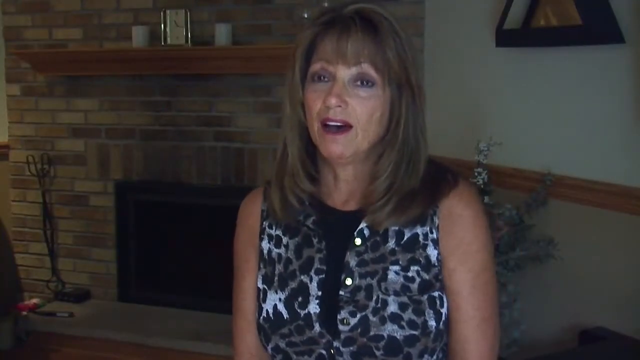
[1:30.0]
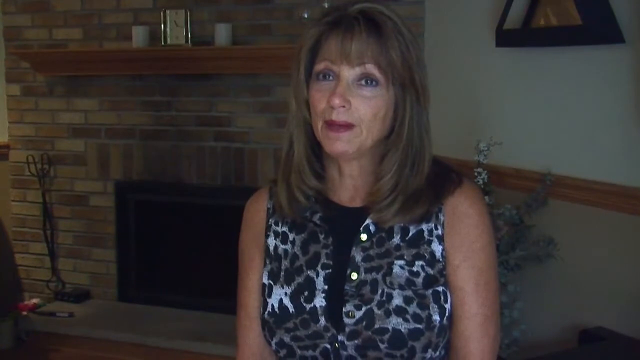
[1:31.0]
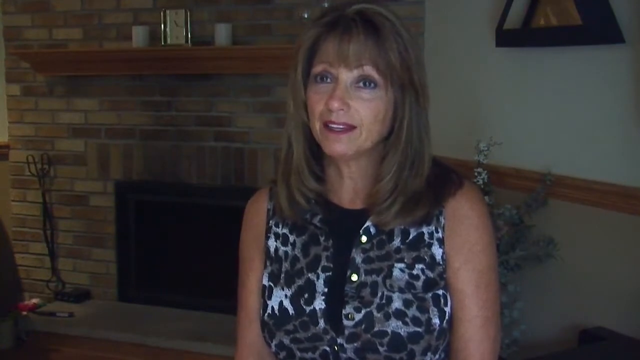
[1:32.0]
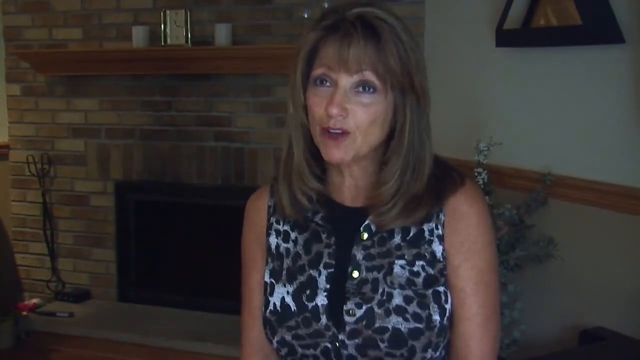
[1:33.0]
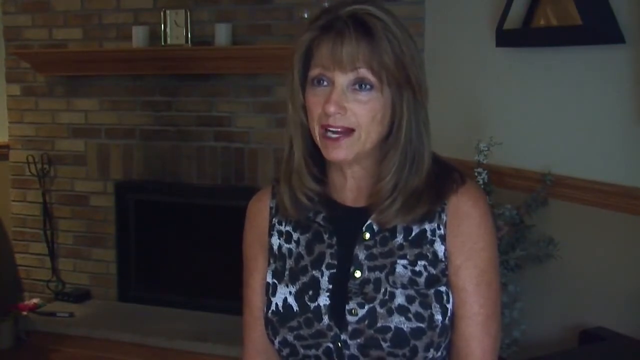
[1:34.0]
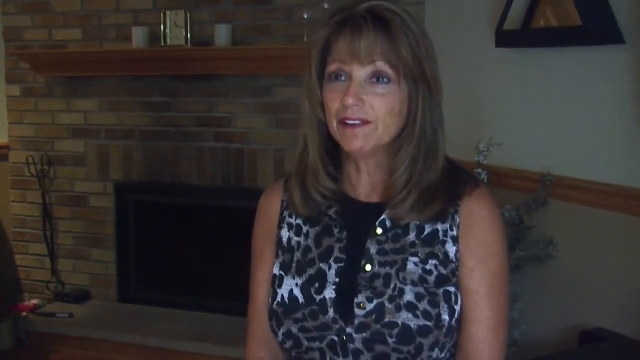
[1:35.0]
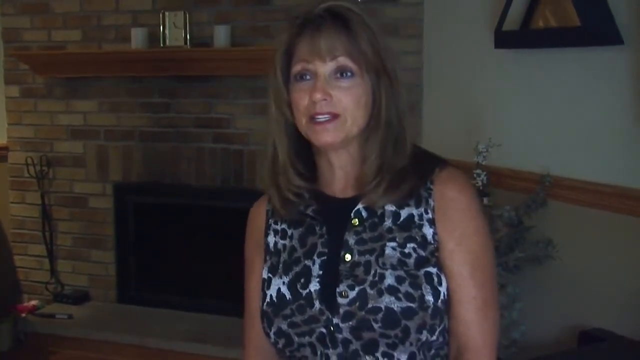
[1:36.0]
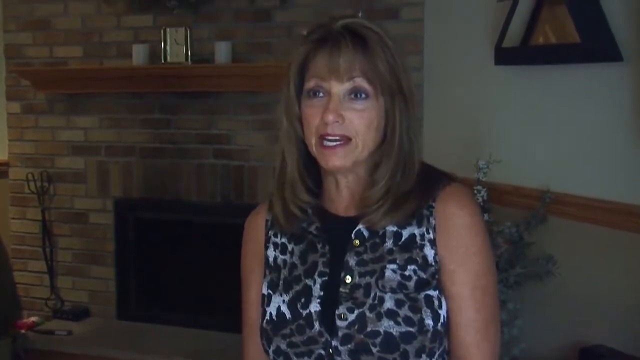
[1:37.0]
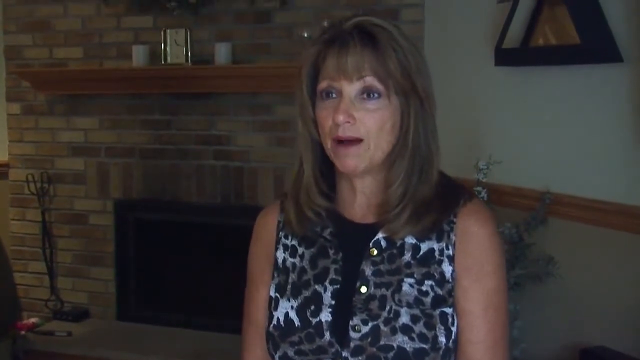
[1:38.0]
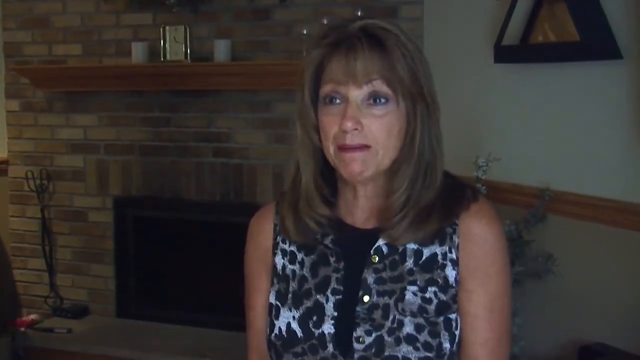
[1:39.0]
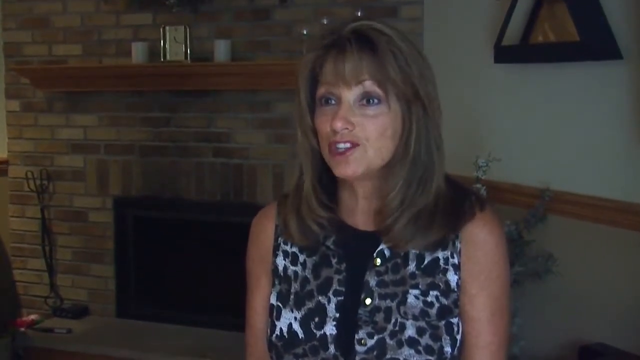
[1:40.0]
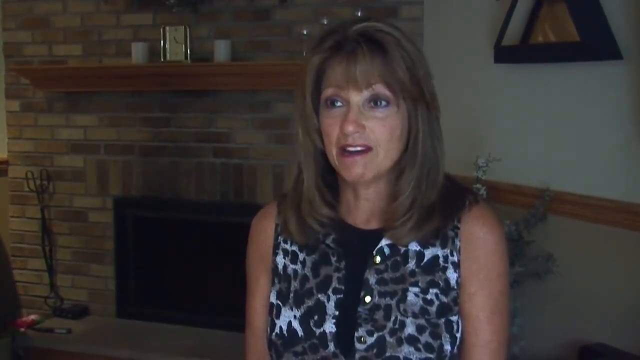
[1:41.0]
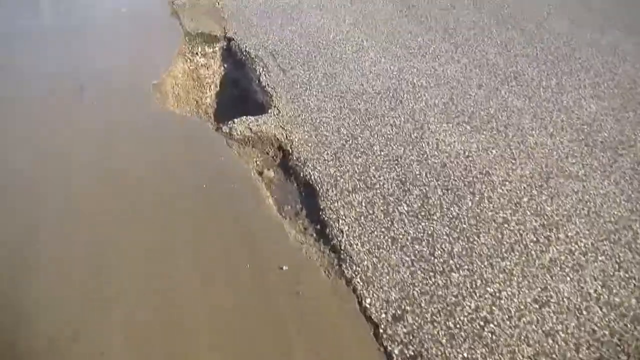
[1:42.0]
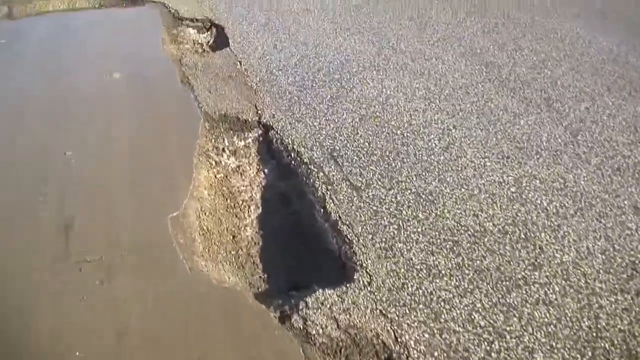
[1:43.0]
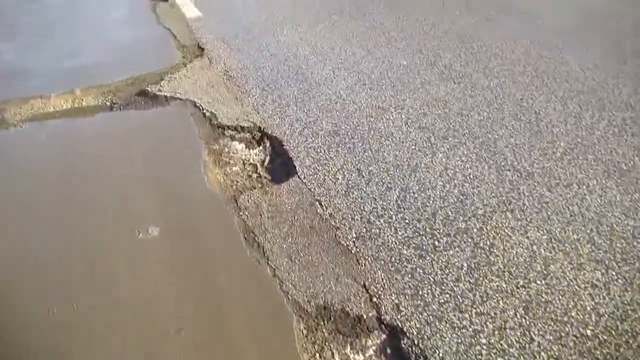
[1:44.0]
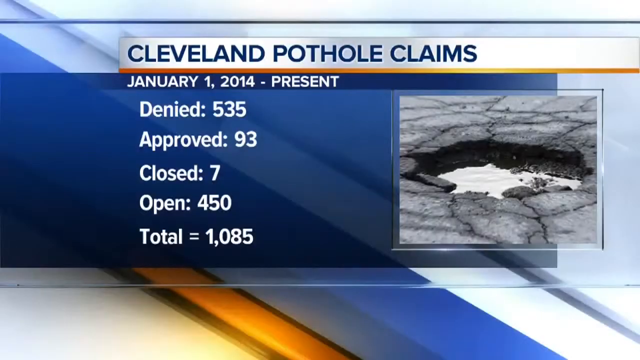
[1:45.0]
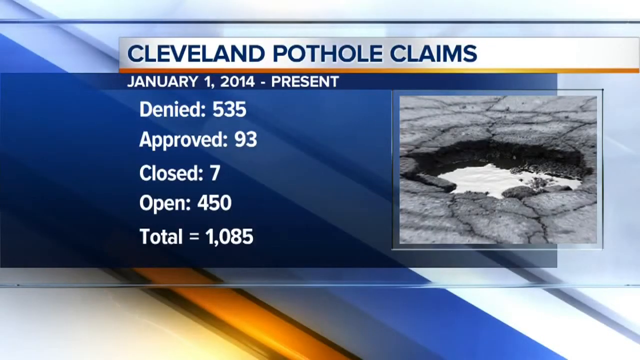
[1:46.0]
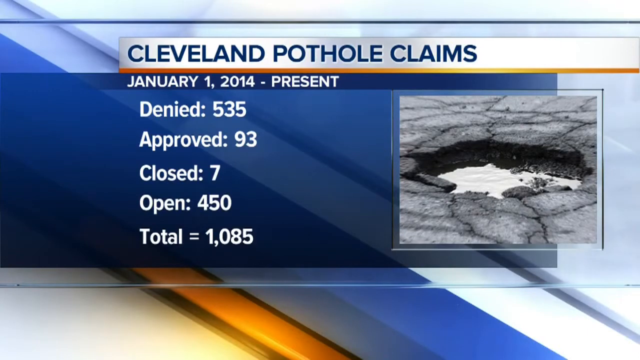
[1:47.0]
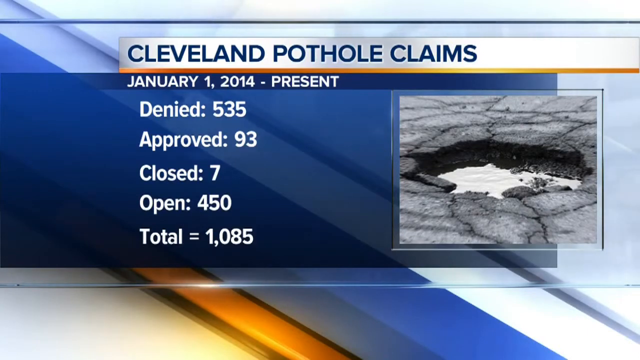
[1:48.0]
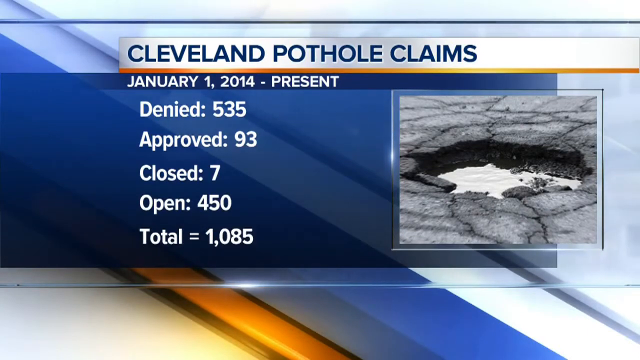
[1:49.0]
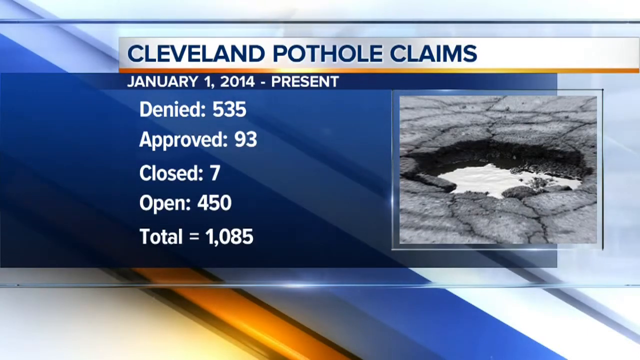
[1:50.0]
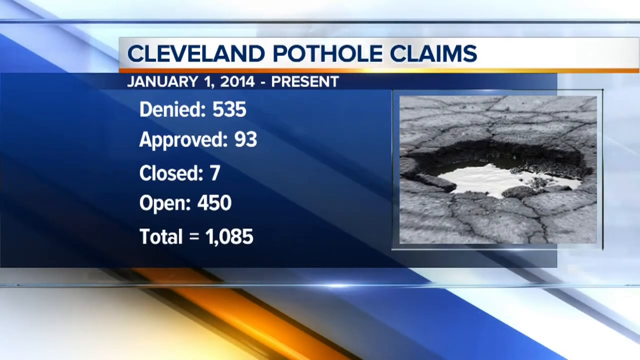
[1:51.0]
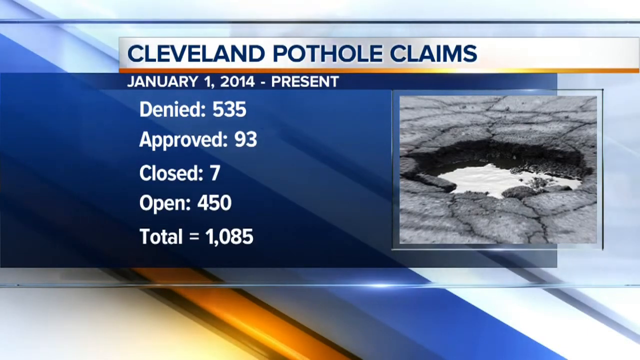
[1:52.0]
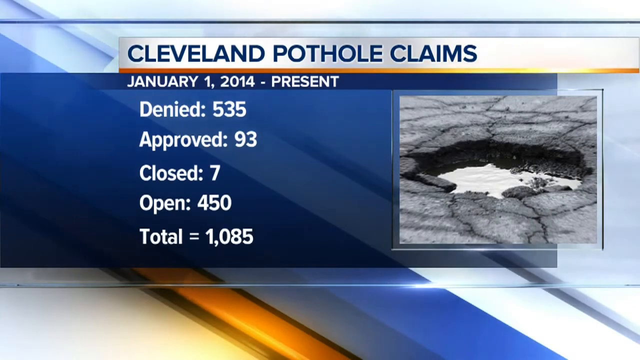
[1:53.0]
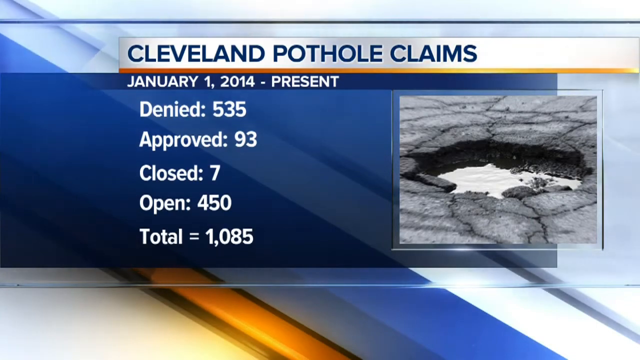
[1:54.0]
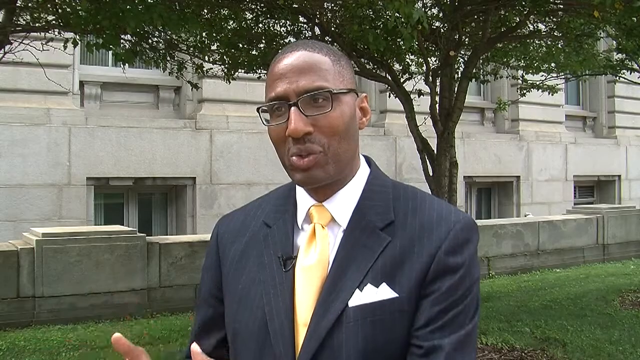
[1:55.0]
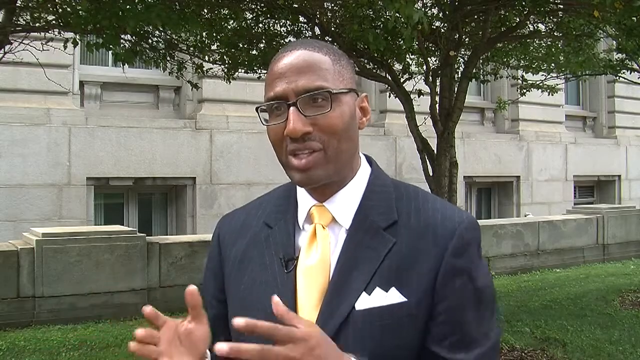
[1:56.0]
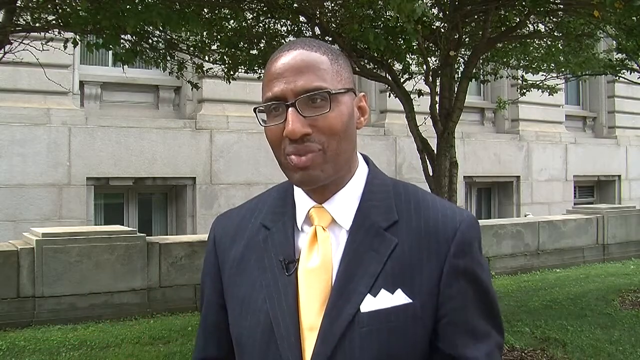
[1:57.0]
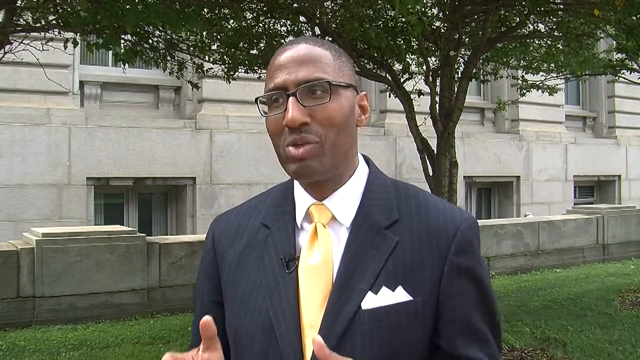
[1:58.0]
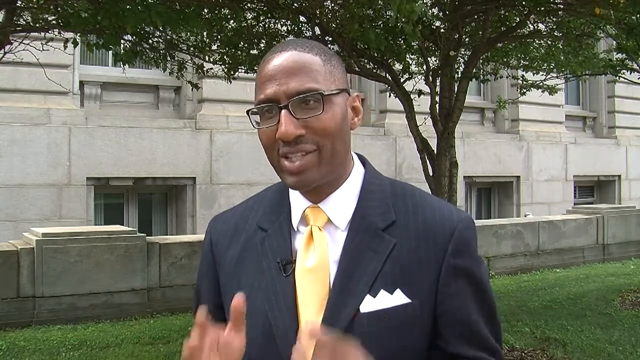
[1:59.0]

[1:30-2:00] The woman claiming her vehicle needs repair is inside a house, apparently her own, with a chimney, candles placed on a table-like feature mounted on the wall, and a framed picture mounted on the wall. She has blonde hair and tan makeup and wears a cheetah-like vest over a black top, speaking to the camera. Behind her is a tree or flower with white petals. Footage of the road with potholes follows. A graphic titled "Cleveland Pothole Claims" from January 1st 2014 to present shows 535 denied, 93 approved, 7 closed and 450 open, totaling 1085, with a picture of a pothole that looks dangerous on the right. The scene then shifts to a black man wearing glasses and a black tie, talking with apparently the cameraman or interviewer. Behind him are houses or offices and a tree on the grass.